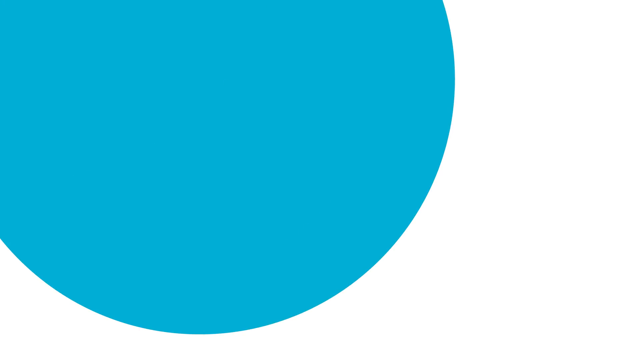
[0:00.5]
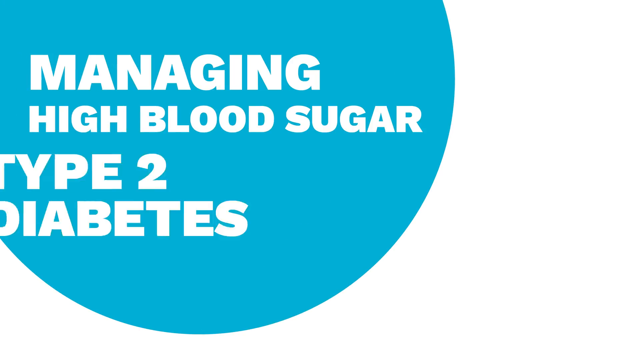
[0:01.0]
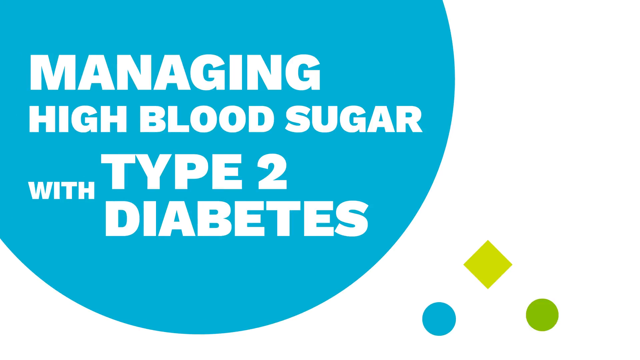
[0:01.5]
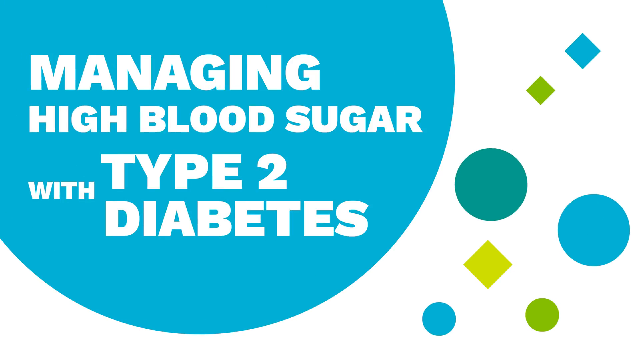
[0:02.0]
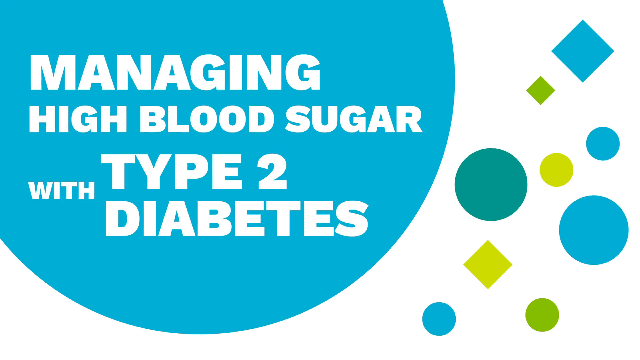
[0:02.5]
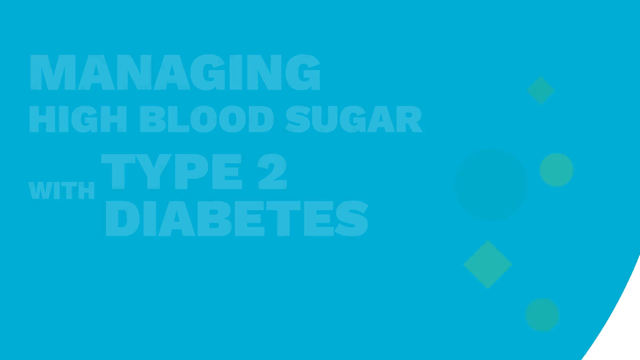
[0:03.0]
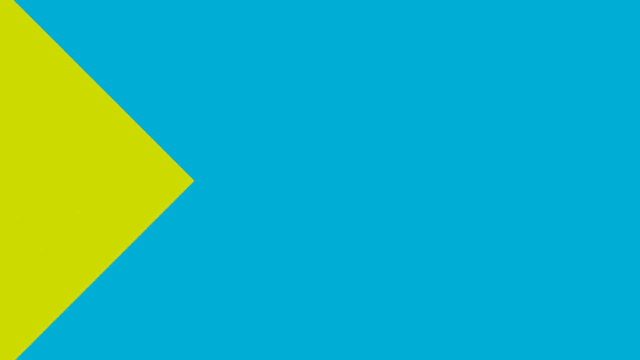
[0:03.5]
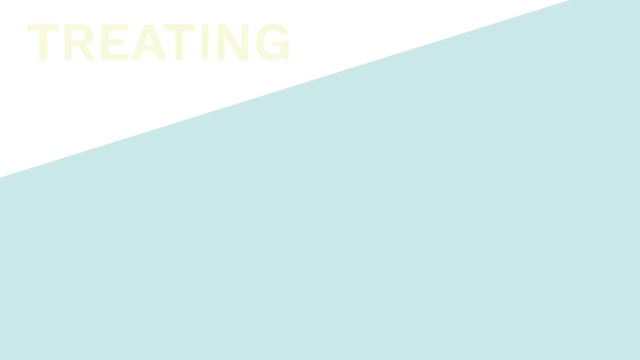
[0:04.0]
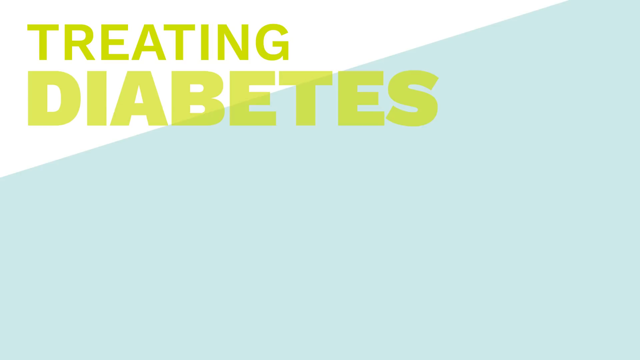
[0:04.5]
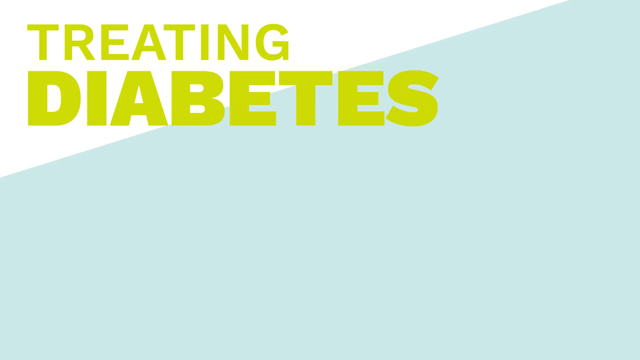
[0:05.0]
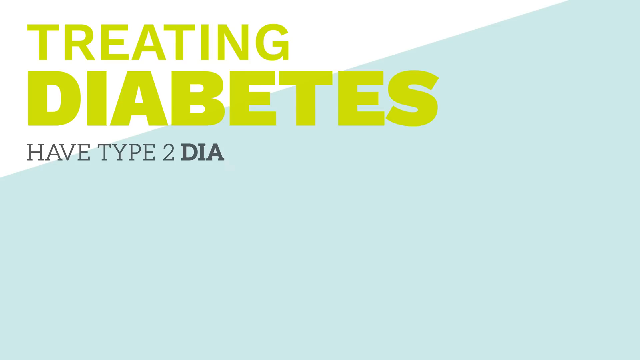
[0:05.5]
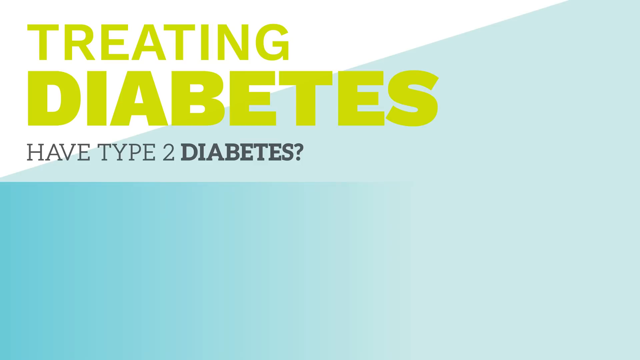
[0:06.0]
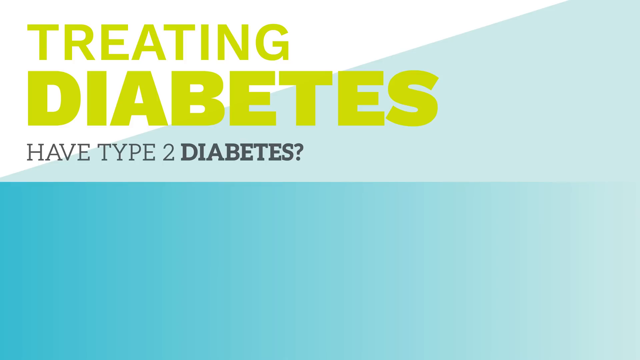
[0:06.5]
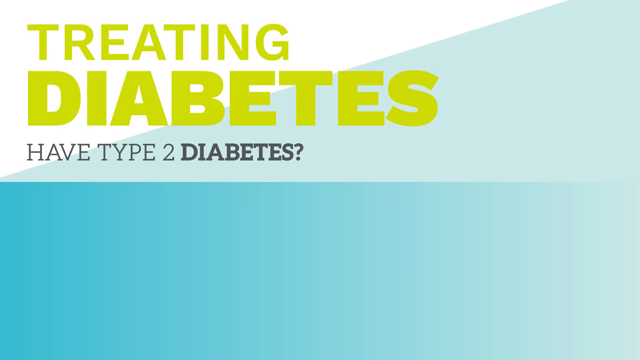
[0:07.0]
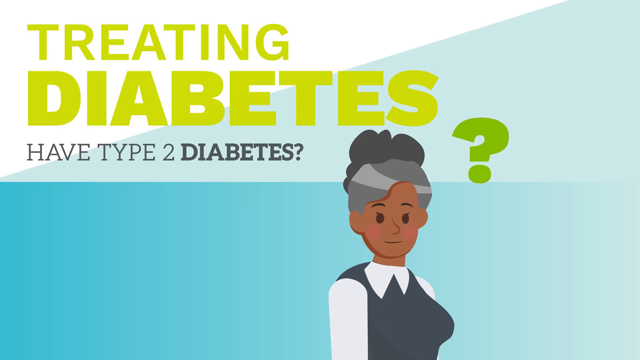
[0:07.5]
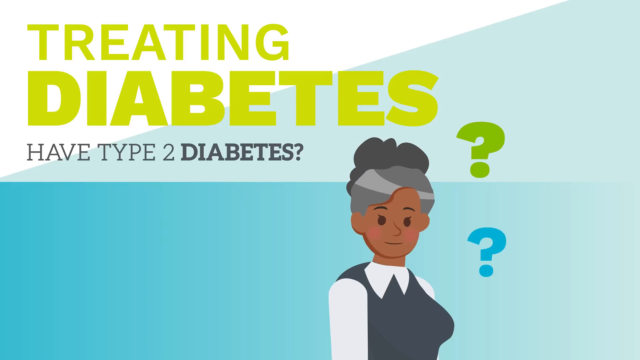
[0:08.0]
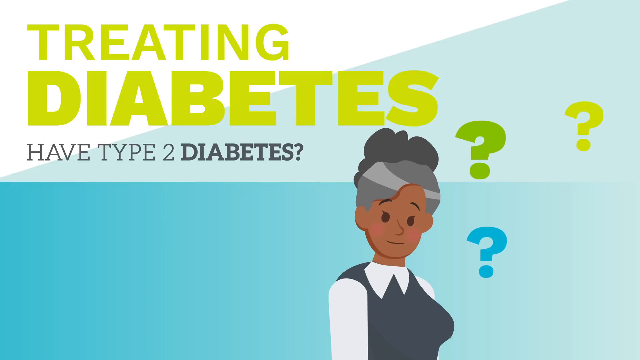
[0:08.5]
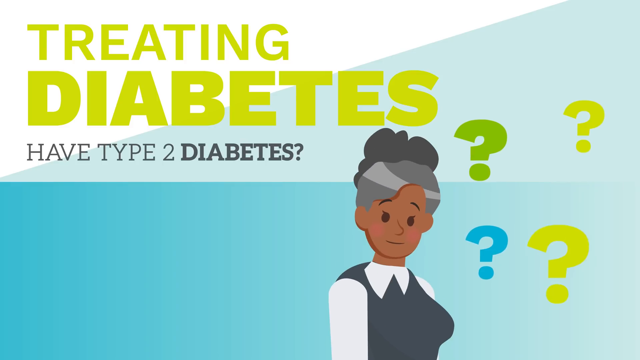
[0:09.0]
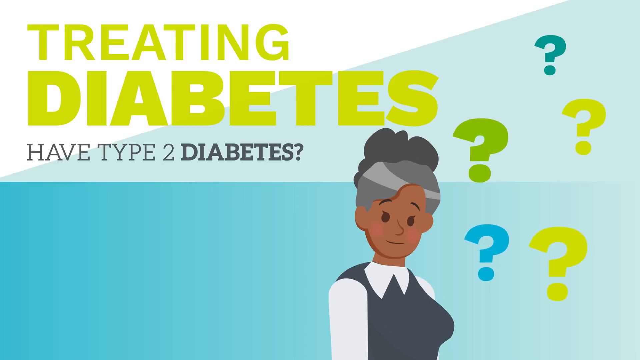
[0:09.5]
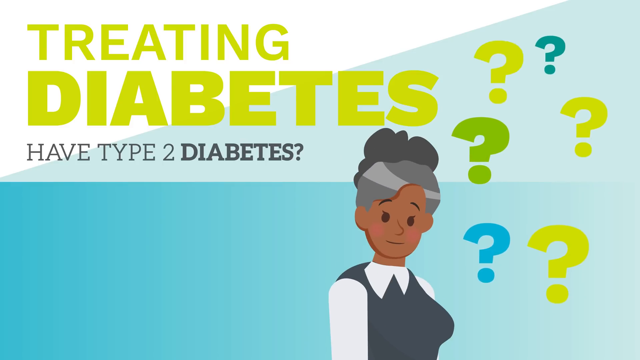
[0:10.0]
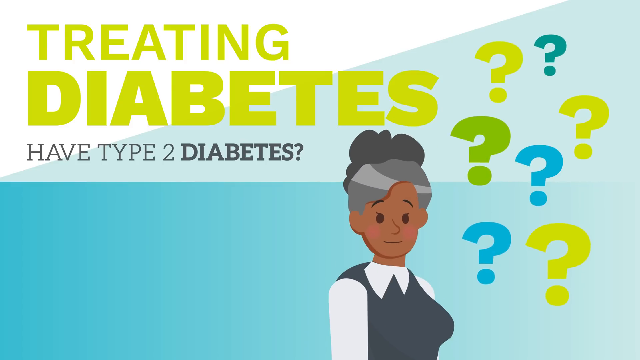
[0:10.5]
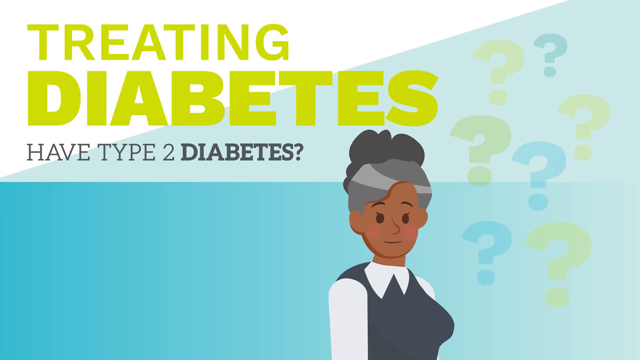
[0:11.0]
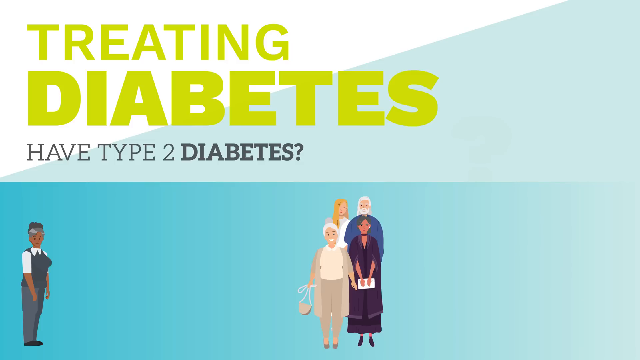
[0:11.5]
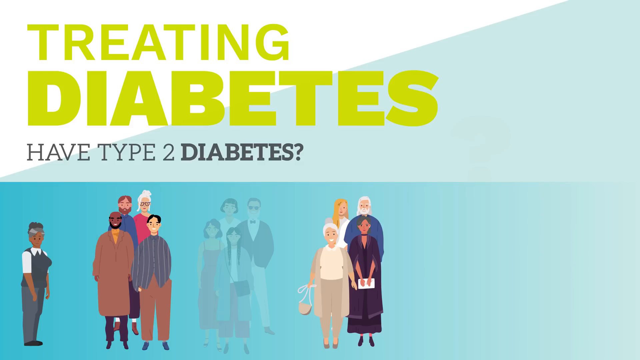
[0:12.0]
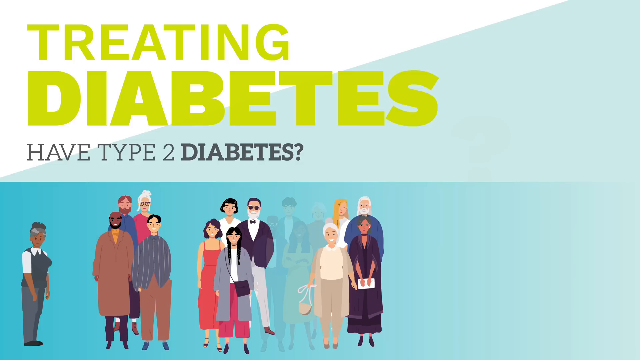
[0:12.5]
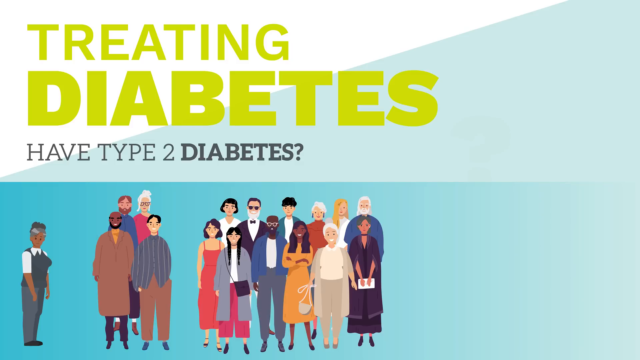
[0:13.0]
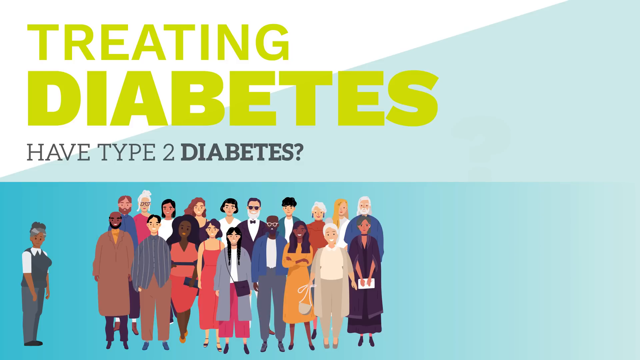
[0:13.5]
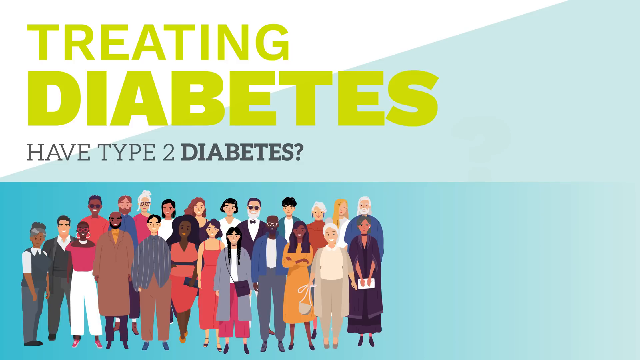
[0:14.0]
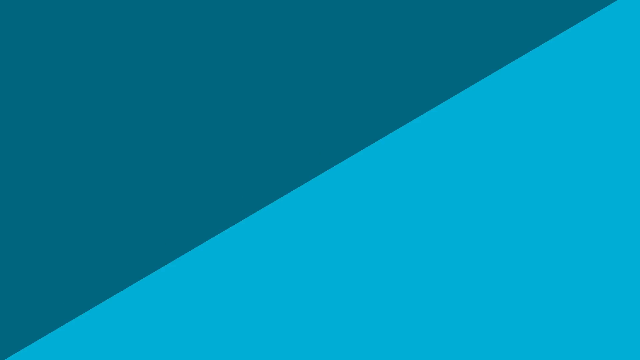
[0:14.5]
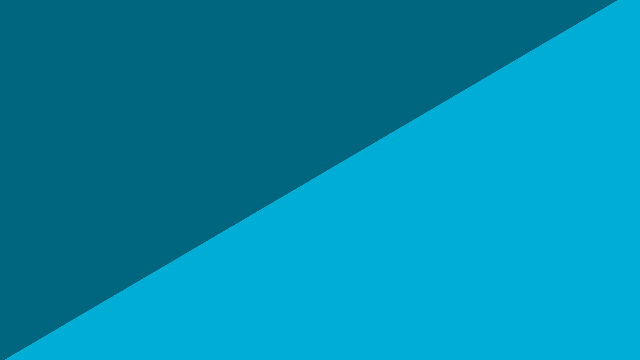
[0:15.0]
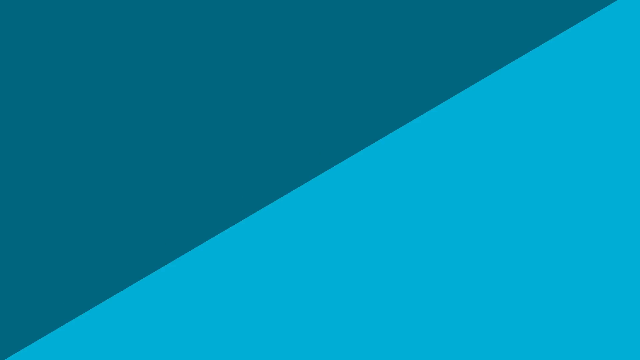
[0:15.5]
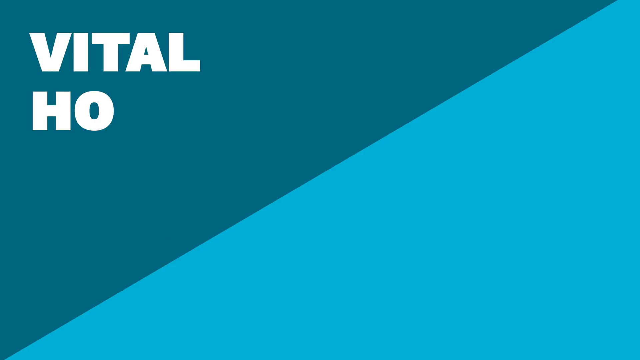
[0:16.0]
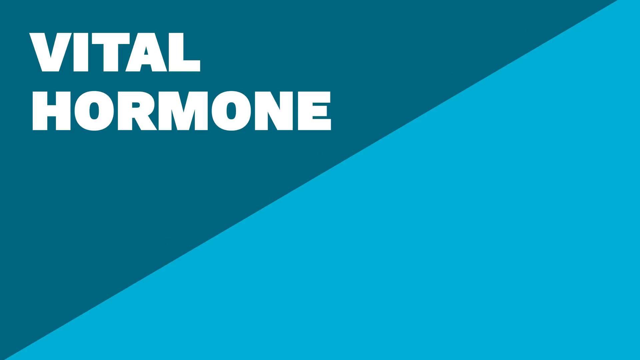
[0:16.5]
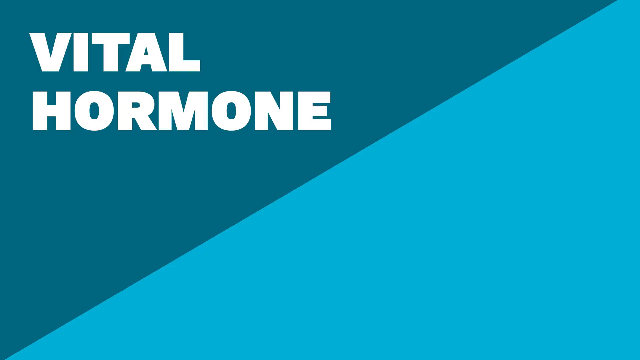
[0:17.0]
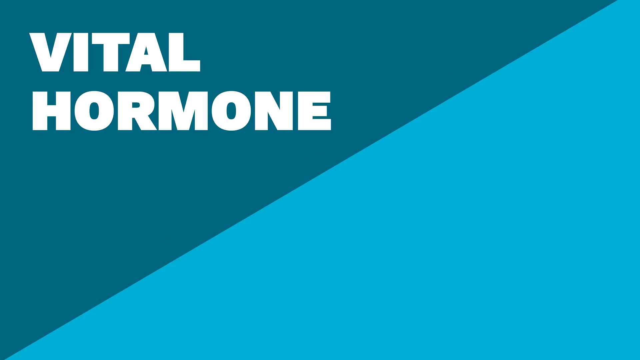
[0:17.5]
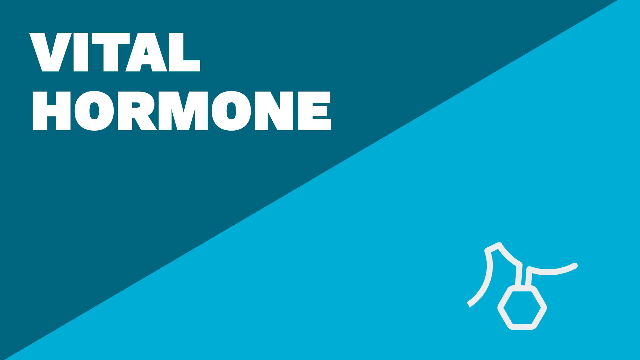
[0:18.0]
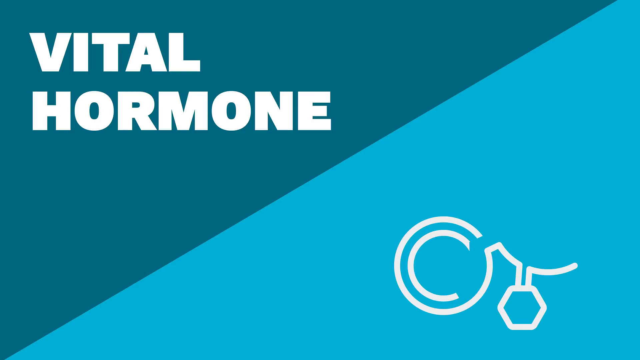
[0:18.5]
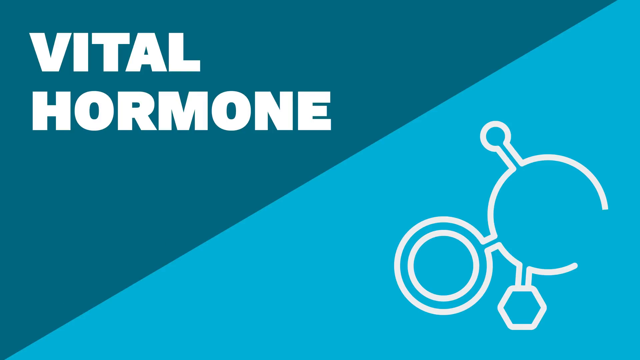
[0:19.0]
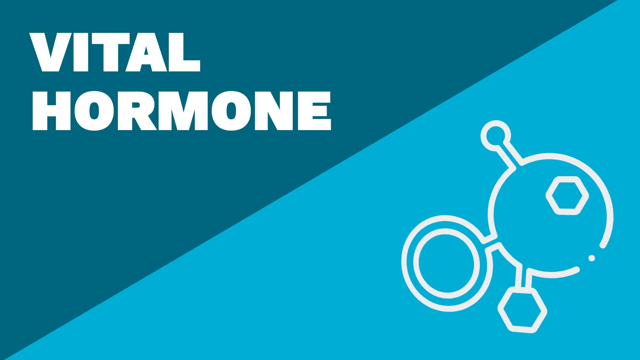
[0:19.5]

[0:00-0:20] The video opens with a slide titled "managing blood sugar when you have type 2 diabetes" on a white background with a blue circle, as several small blue and yellow geometric shapes pop up on the side. It then moves to a caricature of an African American woman with a question mark beside her and the text "managing type 2 diabetes." A crowd starts to form around her as other people and groups of people pop up until there is an entire crowd. The background behind the people is not white like the first slide, but it is lighter than the background of the next slide. That slide is cut diagonally: the lower right is light blue, and the upper left is a darker, grayish light blue with the words "vital hormone" in white lettering, while a spinning-like animation plays in the lower right.